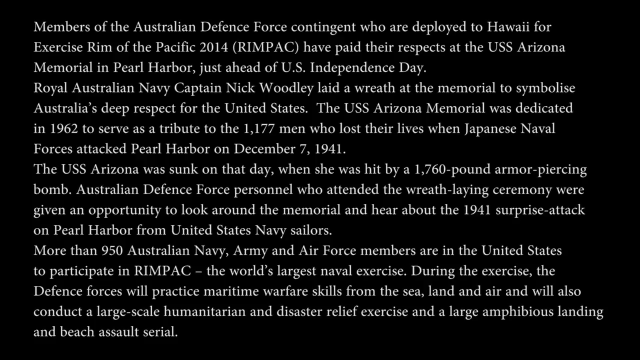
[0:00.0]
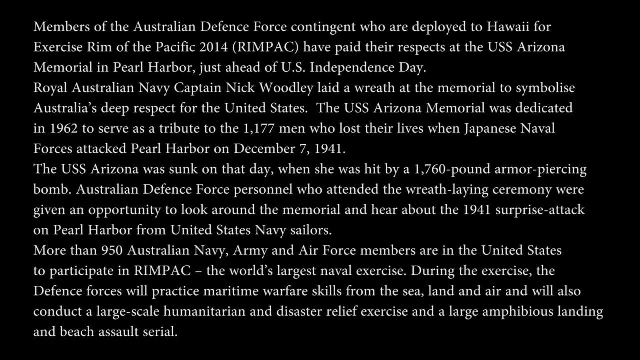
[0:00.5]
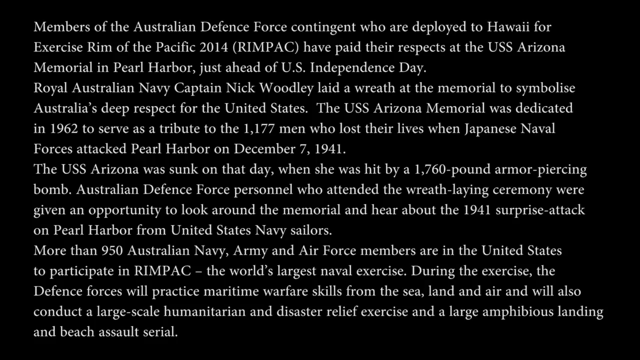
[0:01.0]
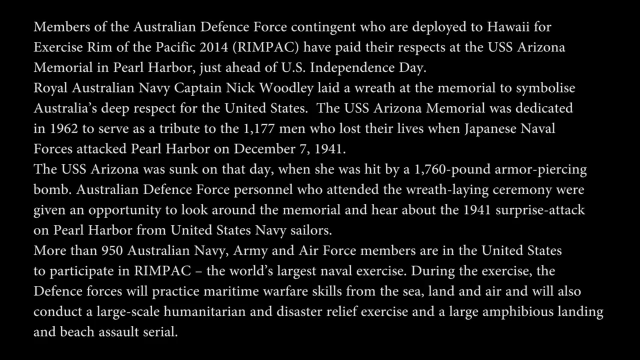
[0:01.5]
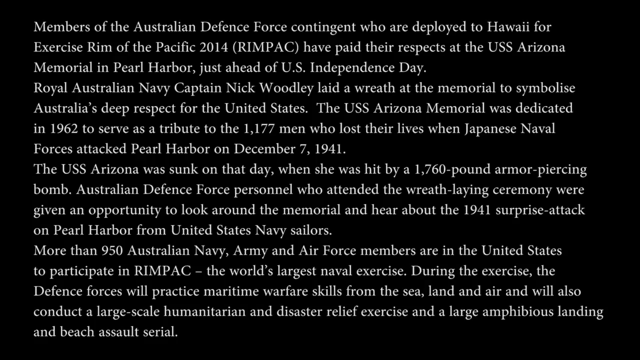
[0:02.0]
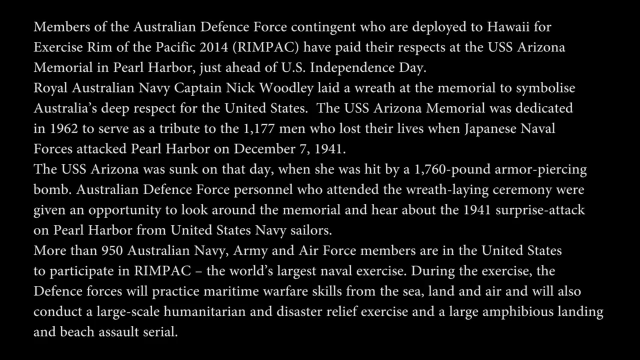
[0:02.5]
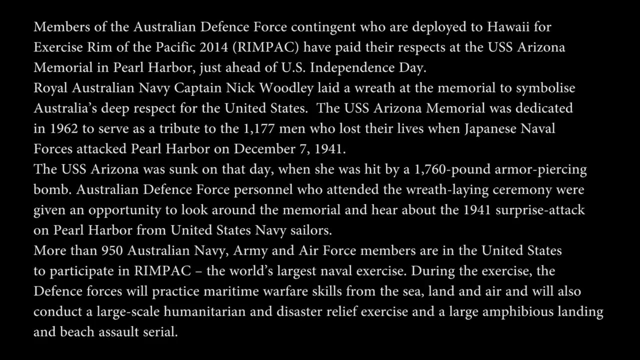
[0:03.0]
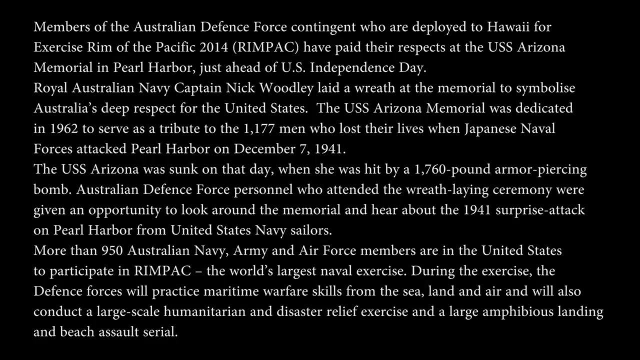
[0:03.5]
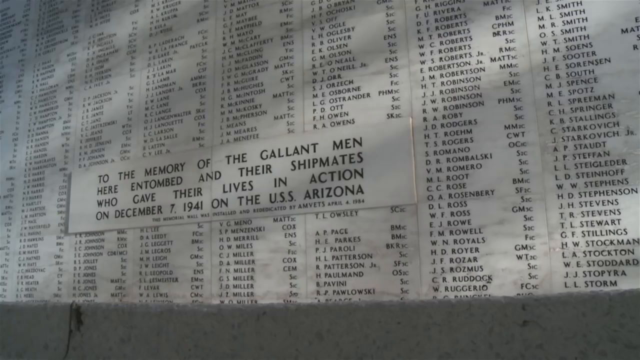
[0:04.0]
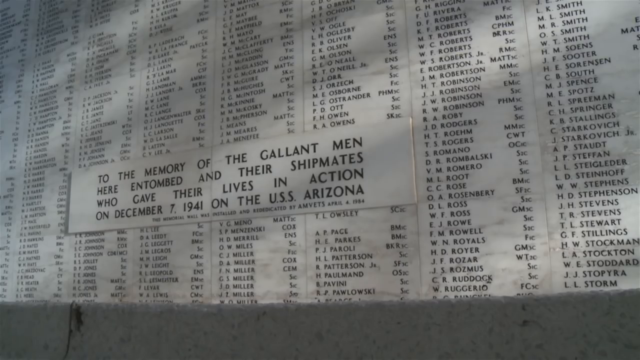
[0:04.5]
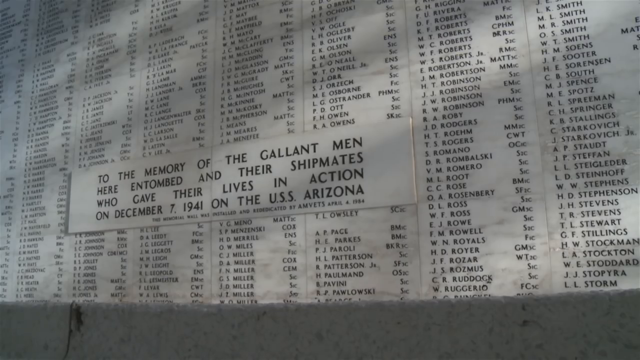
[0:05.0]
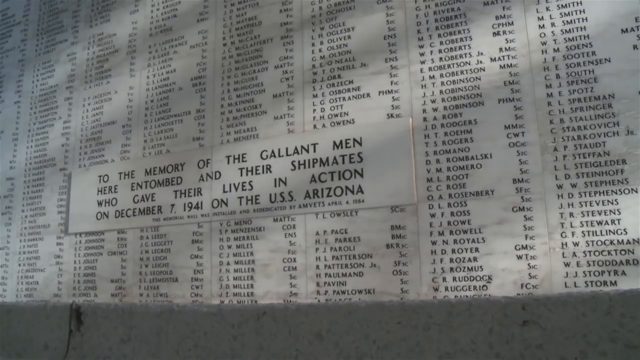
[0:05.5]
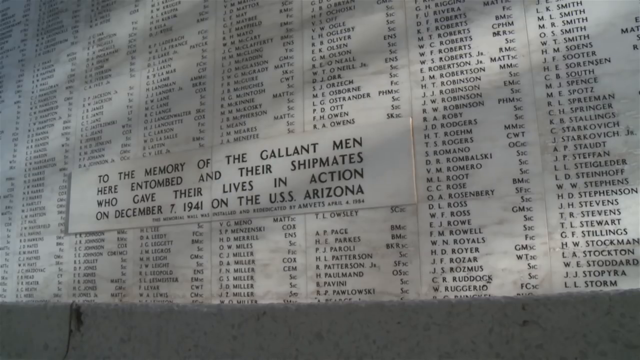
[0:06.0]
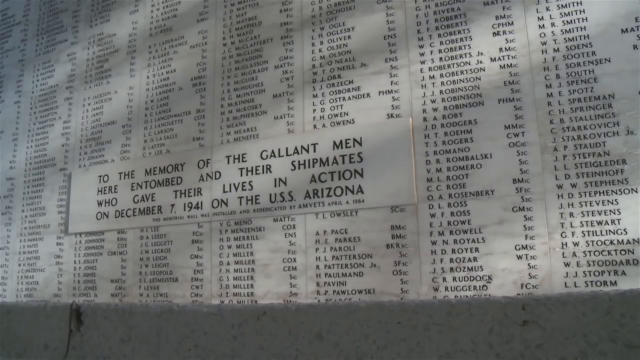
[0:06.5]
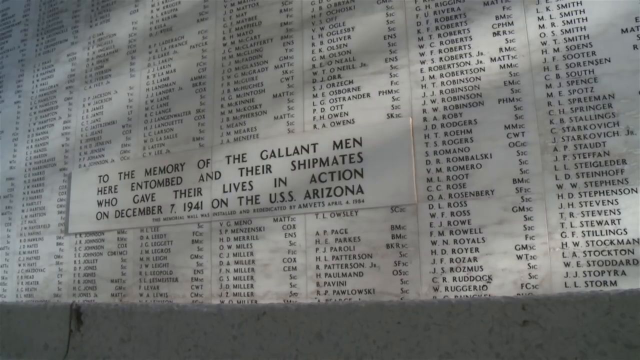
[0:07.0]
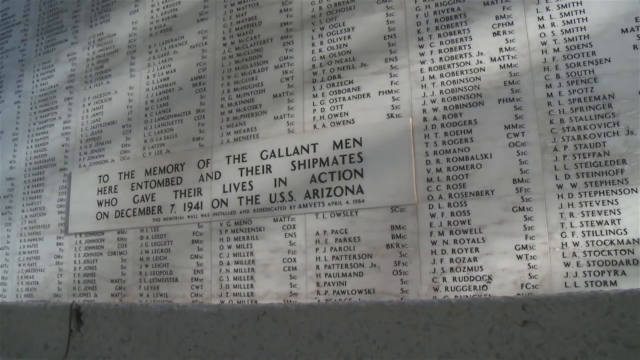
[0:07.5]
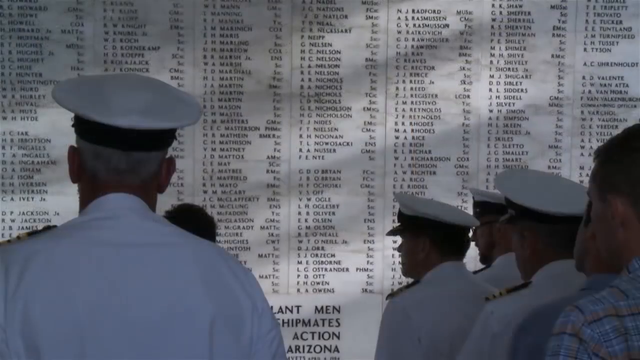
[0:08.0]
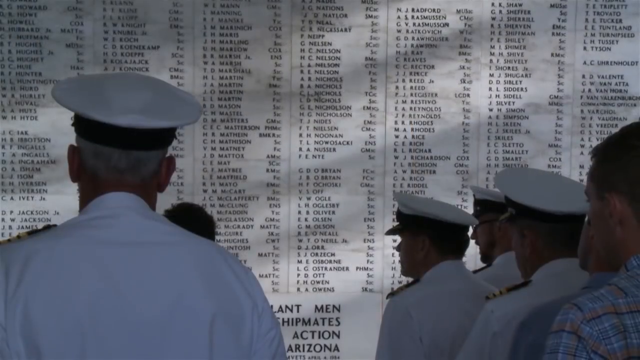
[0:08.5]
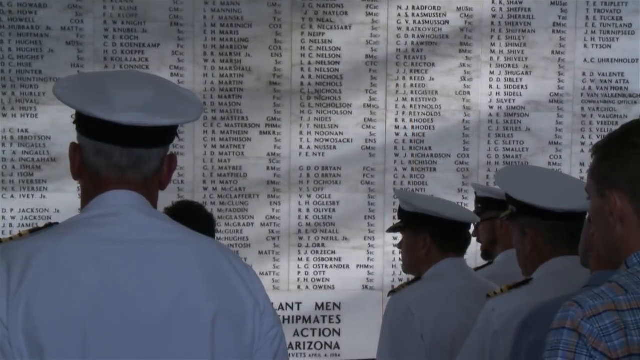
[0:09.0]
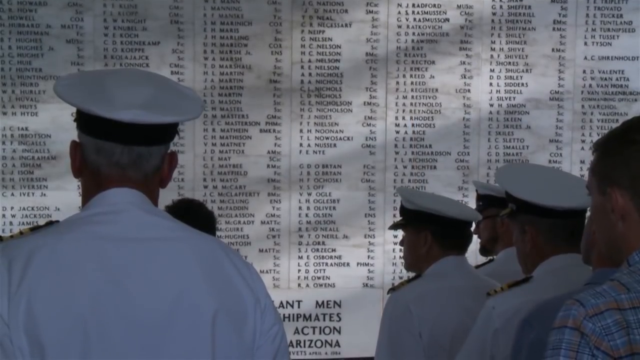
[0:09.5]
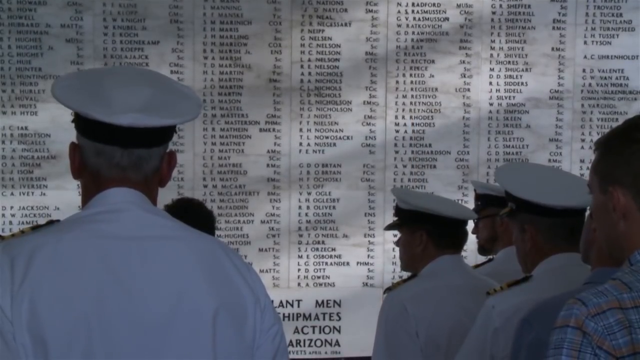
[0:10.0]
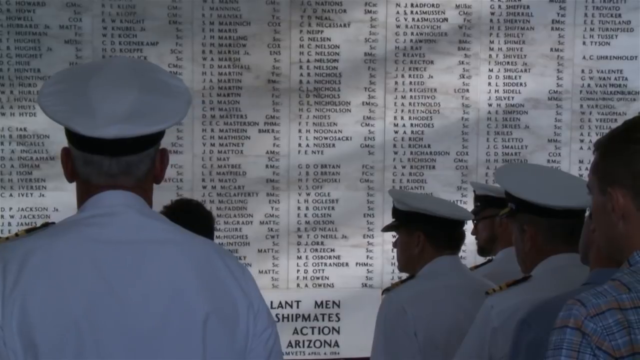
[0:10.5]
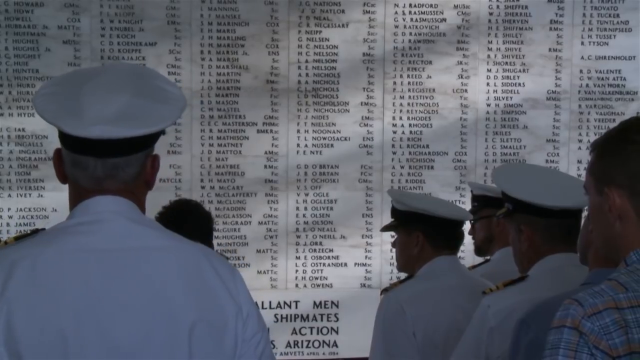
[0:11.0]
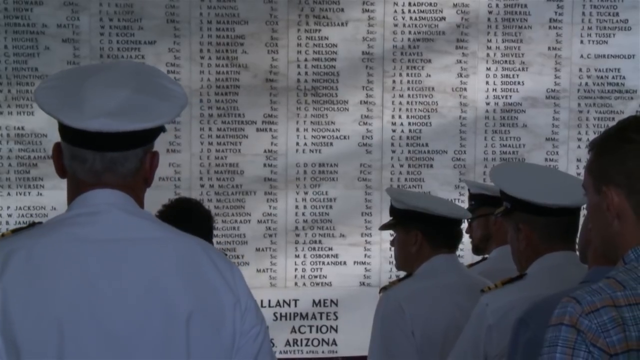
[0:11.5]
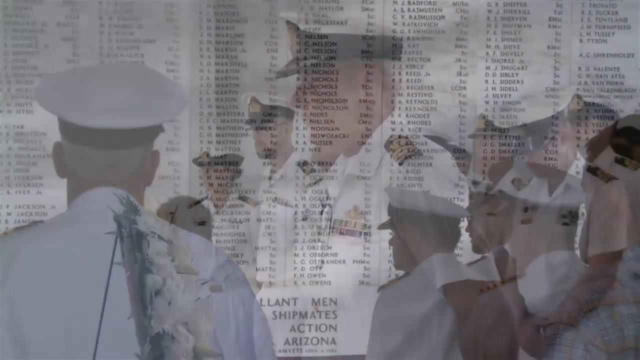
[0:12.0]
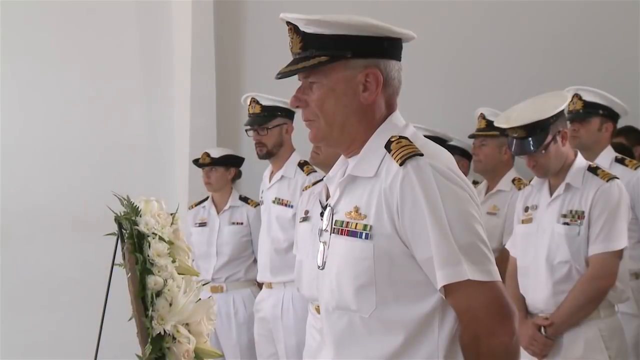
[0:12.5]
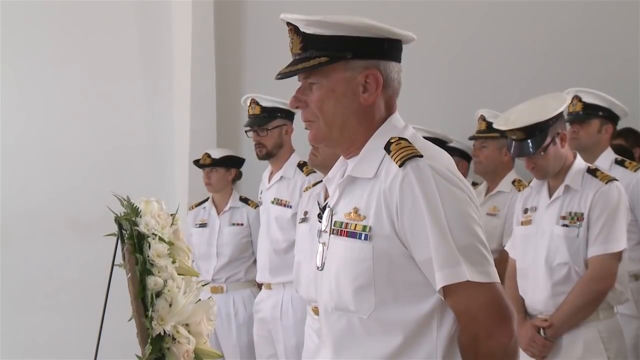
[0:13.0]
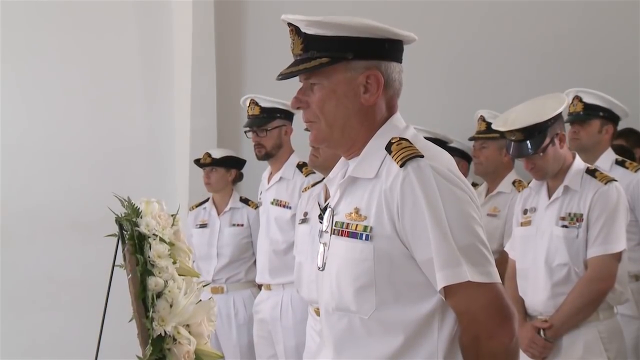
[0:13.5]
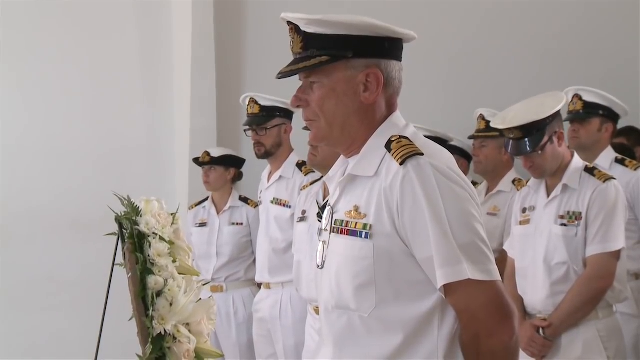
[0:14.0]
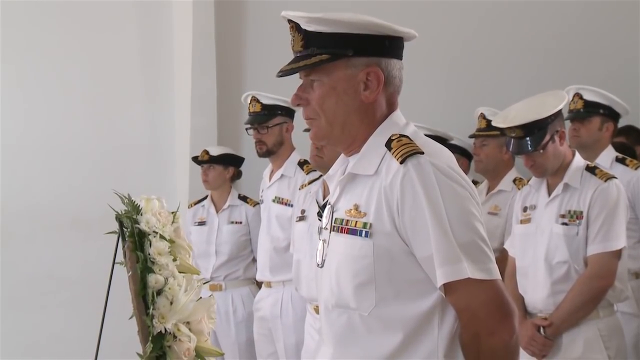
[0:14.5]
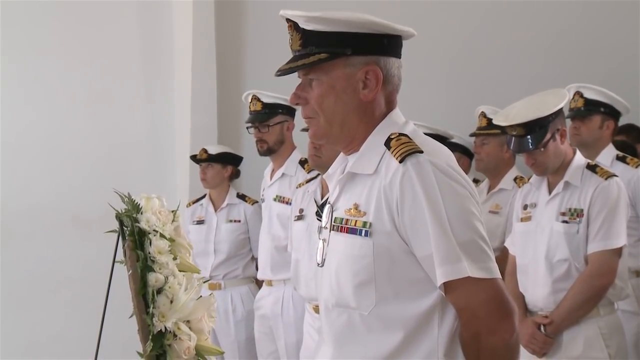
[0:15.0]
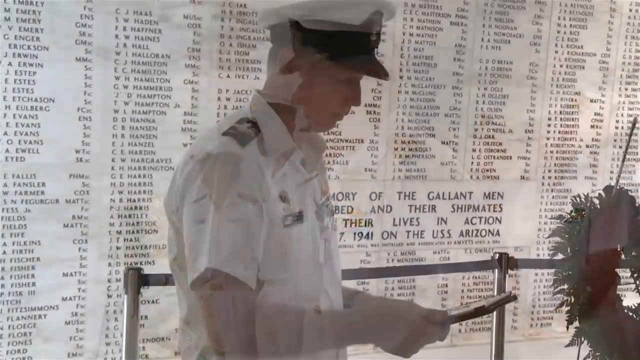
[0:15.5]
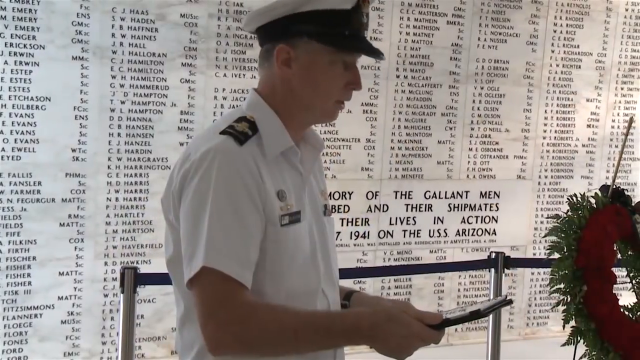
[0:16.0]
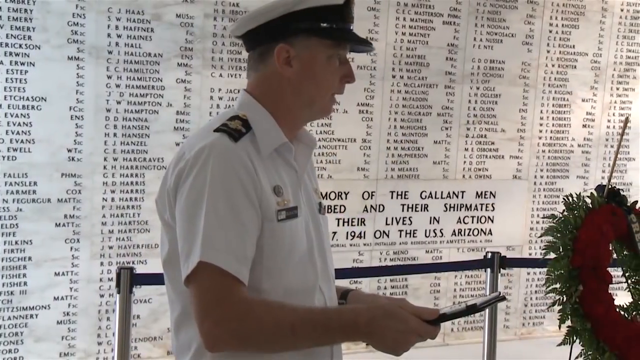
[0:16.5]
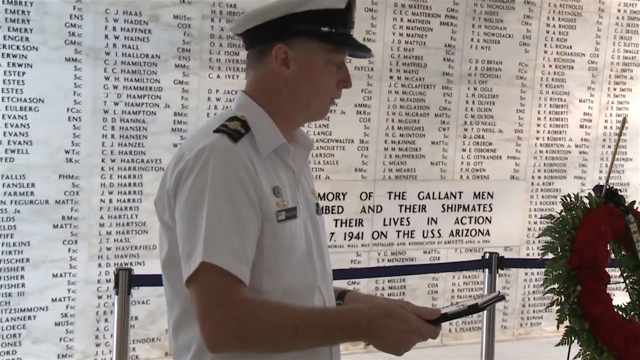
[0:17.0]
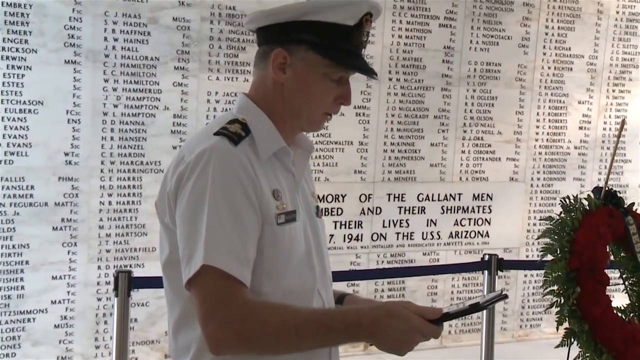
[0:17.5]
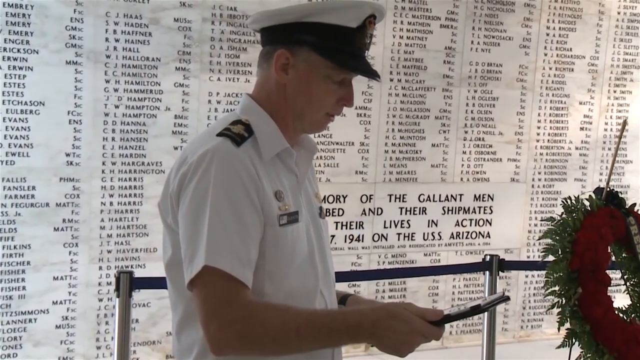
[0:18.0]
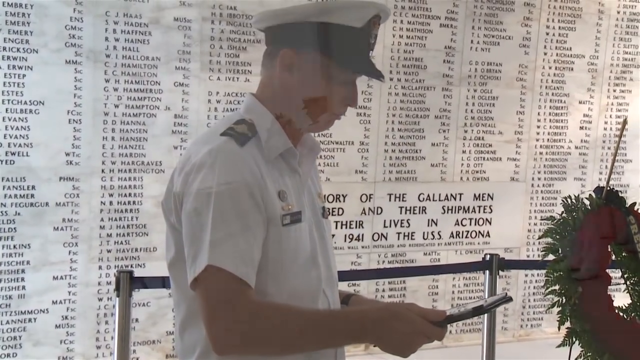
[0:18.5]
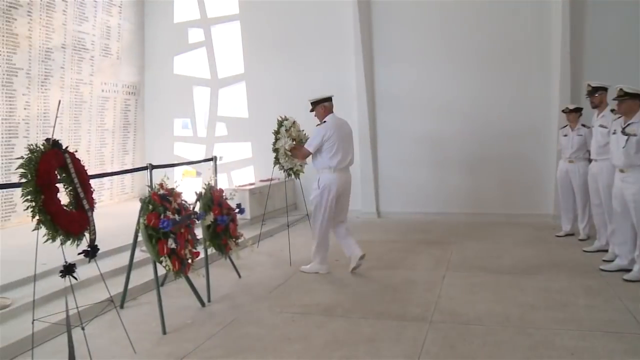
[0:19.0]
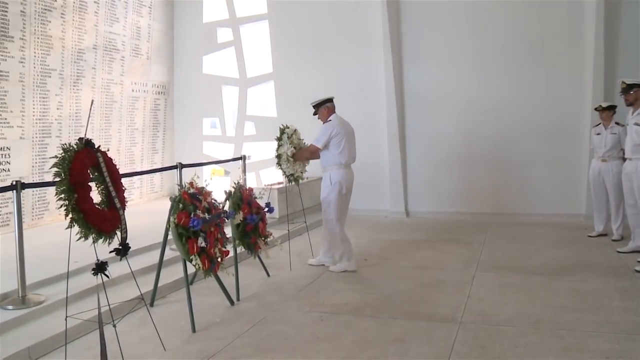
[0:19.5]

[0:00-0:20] The video opens on a screen with information, then switches to film. There is a wall with names listed on it, and men and women stand in front of it. They wear white uniforms with different patches or shoulder pieces that suggest a military context, along with hats that have a black brim and a wide band with a white piece on top. They stare at the wall with calm, mindful faces, showing no particular expression: they are not smiling, laughing or crying, and the mood is calm. One older man holds, looks at and reads what looks like a script, probably a speech for the event. Another older man carries a wreath of flowers, takes steps holding it, and brings it to a stand, where he places it.